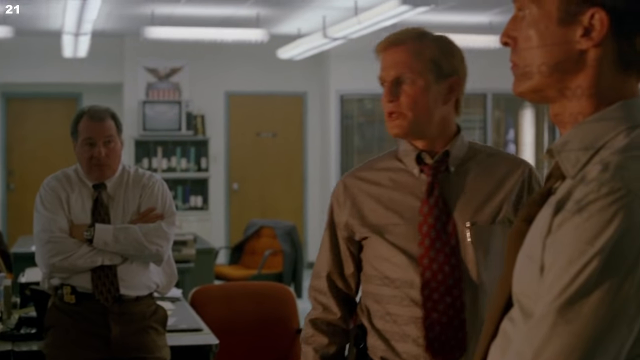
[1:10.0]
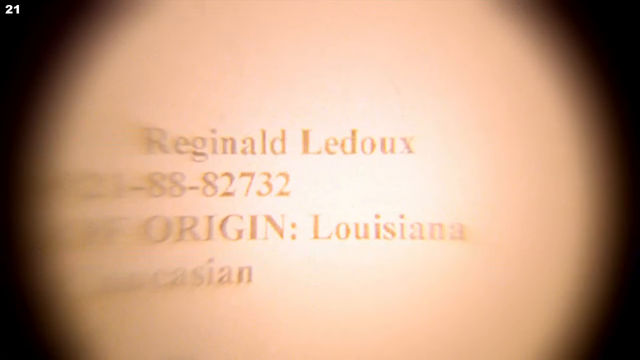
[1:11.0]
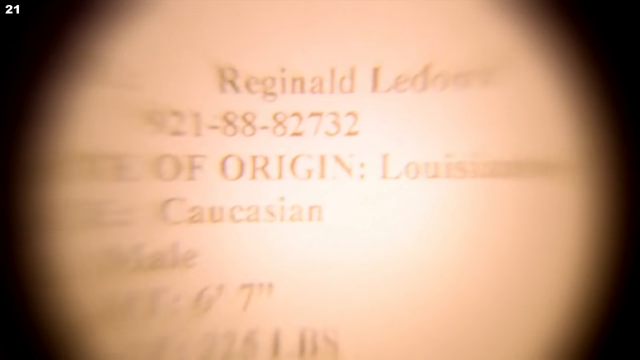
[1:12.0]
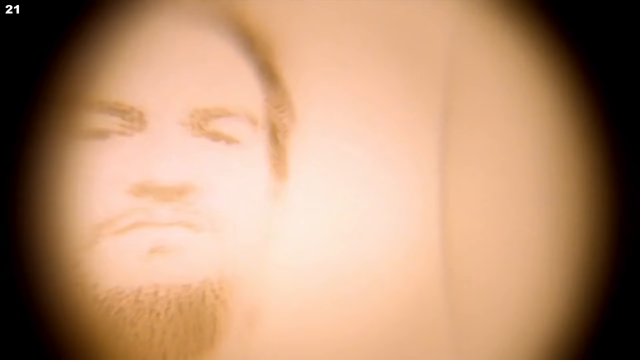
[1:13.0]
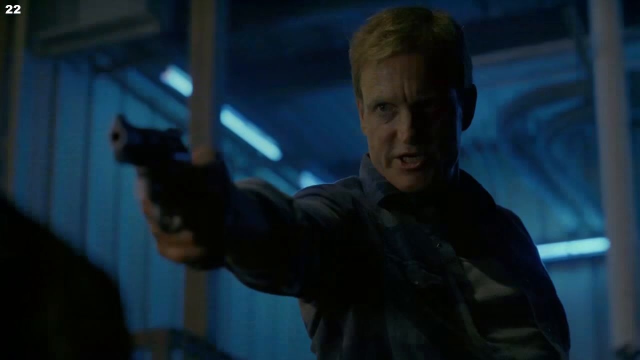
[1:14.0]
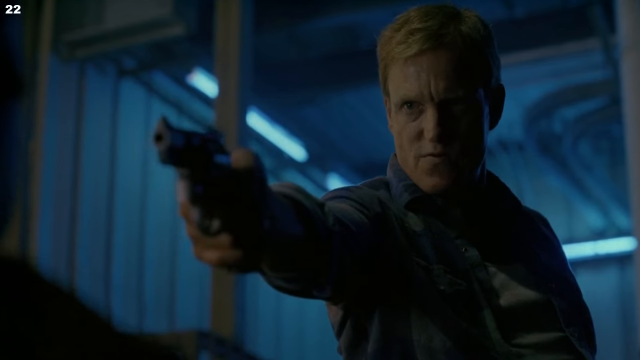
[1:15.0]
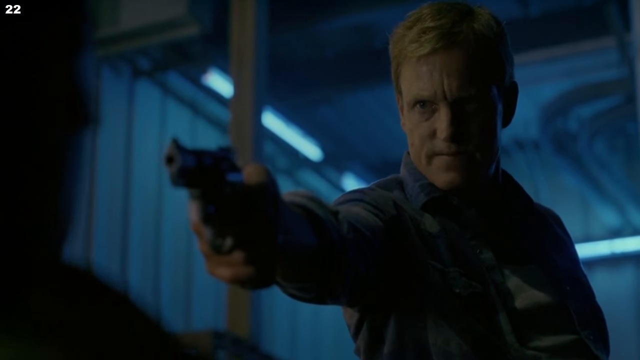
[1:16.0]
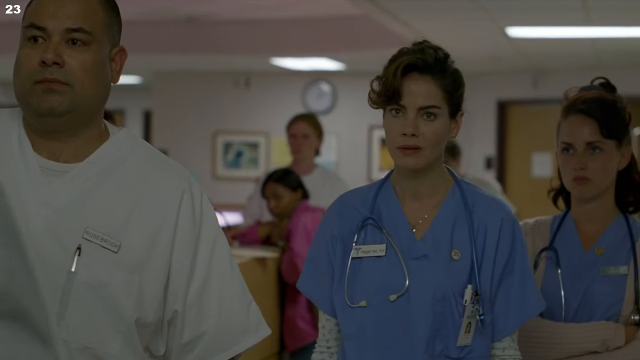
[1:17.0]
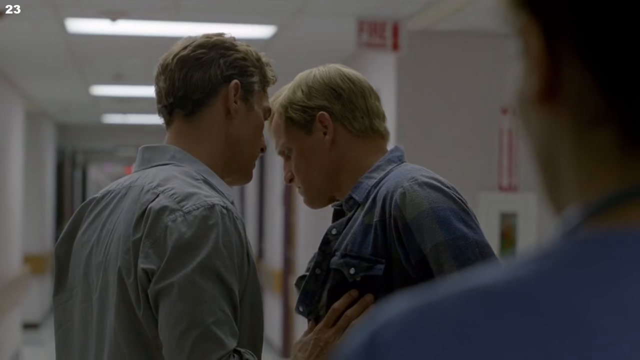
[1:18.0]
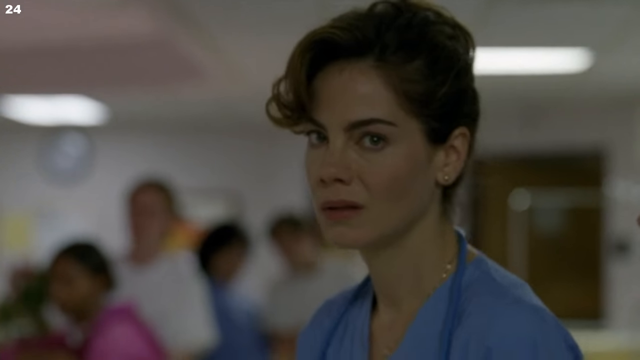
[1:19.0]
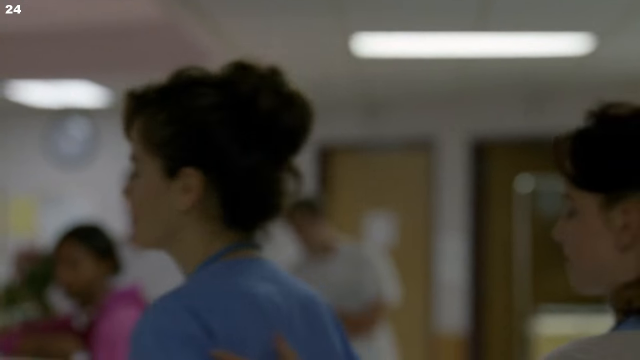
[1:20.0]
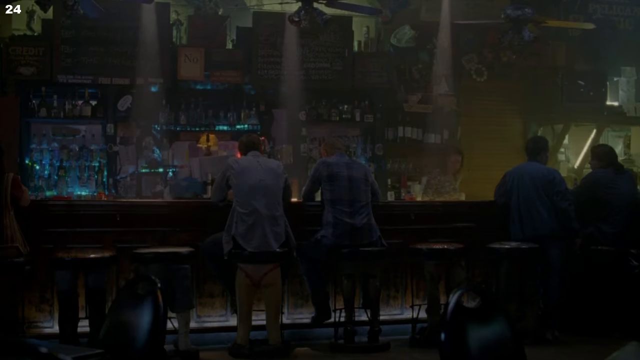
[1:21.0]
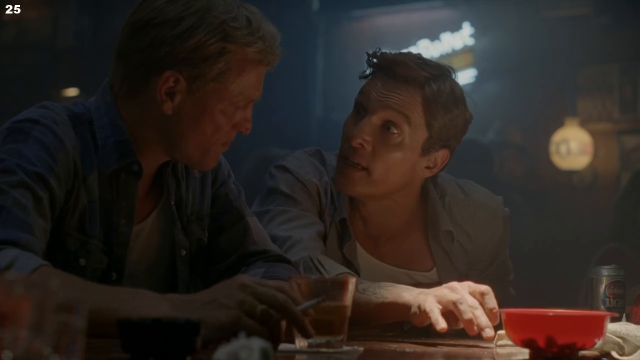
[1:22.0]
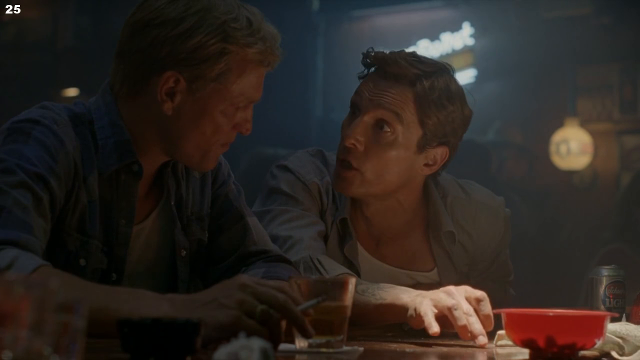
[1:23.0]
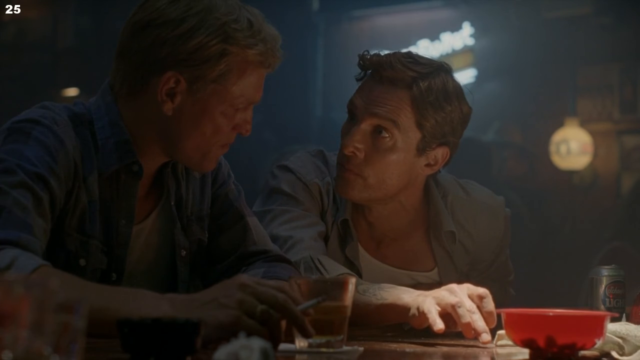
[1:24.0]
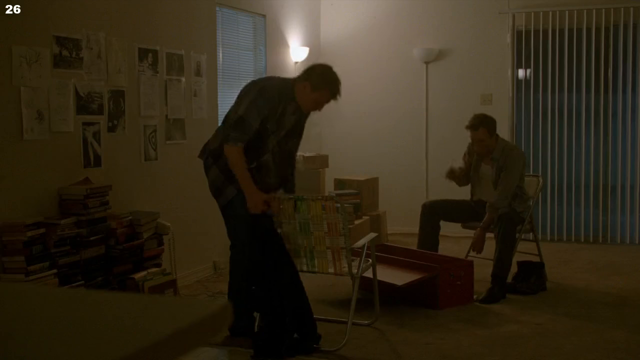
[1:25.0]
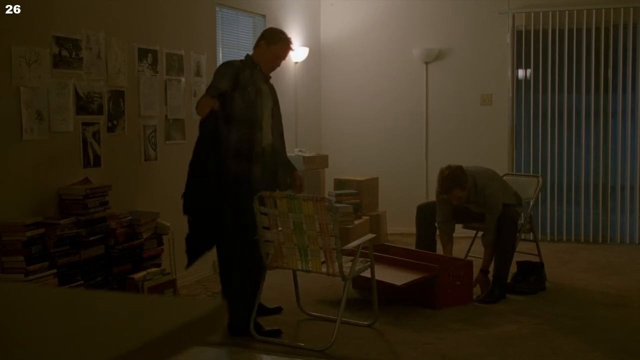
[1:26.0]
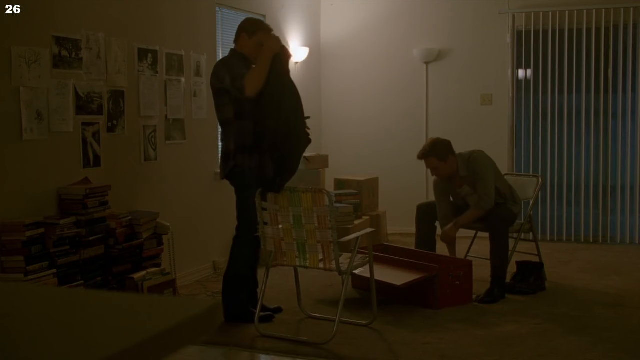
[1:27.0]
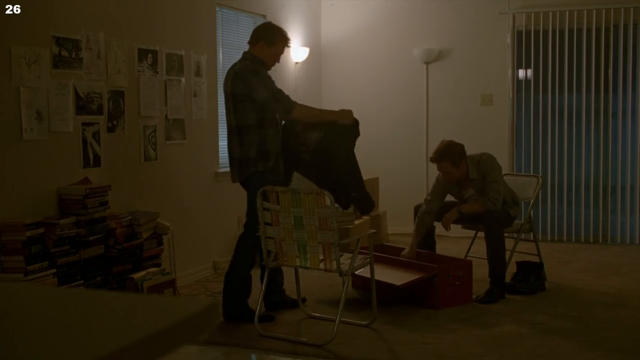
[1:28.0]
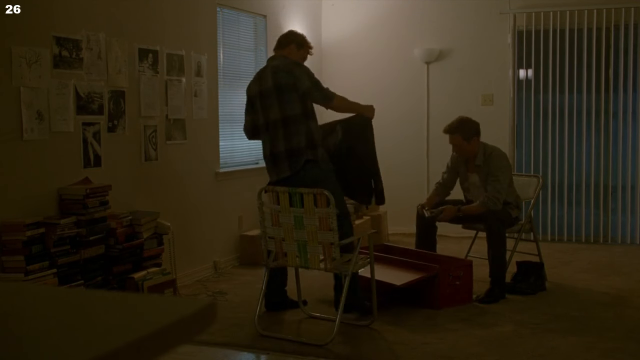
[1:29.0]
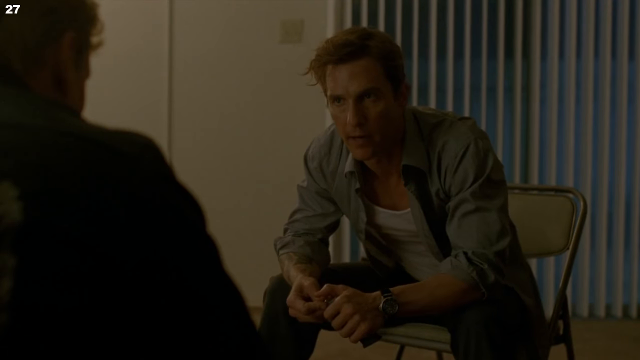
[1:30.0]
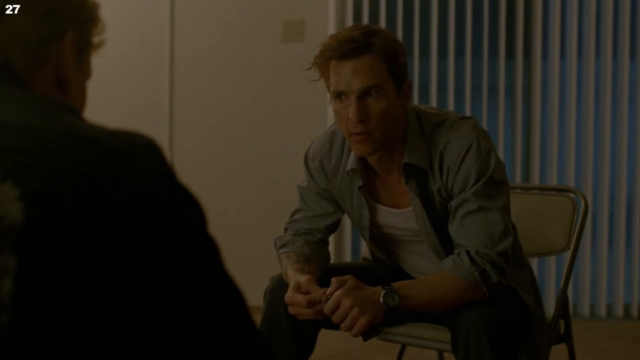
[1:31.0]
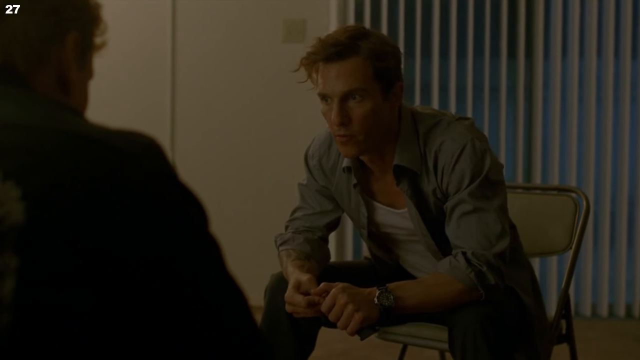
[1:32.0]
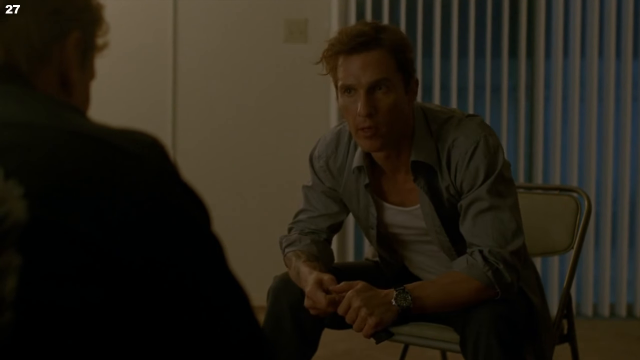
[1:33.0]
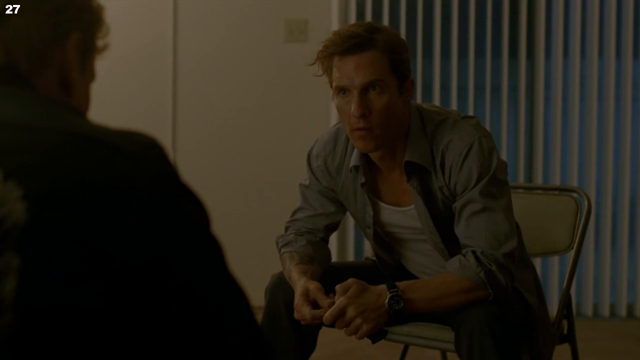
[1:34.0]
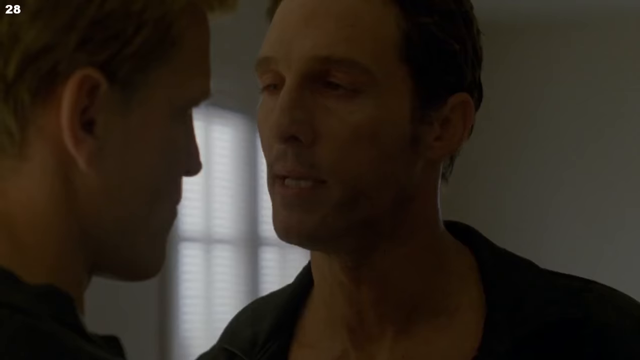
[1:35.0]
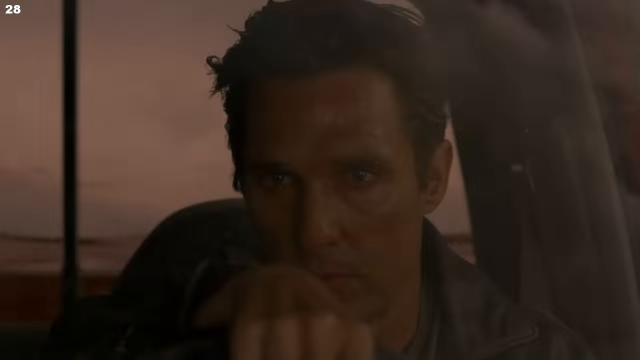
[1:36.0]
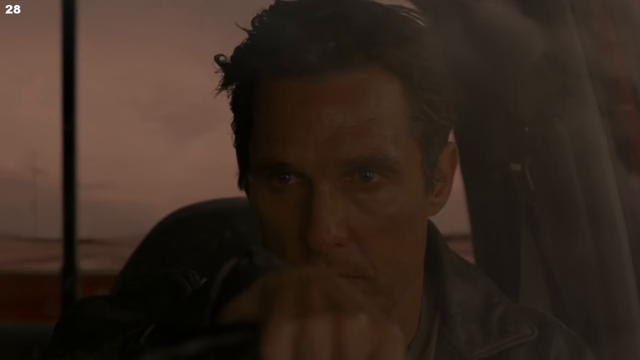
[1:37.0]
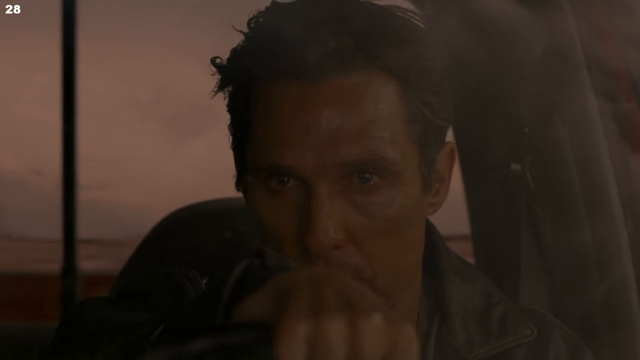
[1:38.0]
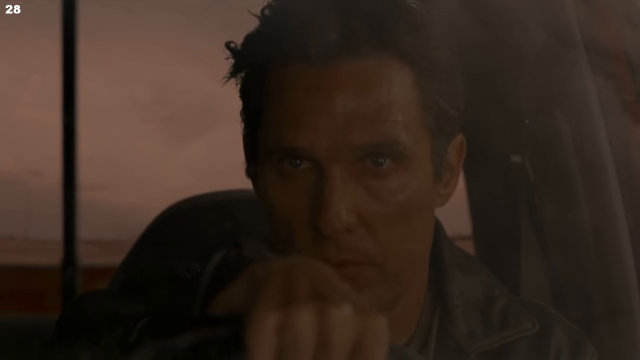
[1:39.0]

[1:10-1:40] The three men have a conversation, and the policeman points a gun at a man who is sitting there. The setting changes: men are at a bar, having a conversation and getting drunk. In another room, men are seated, having a conversation and maintaining eye contact. The other man is driving again, to some hotel.